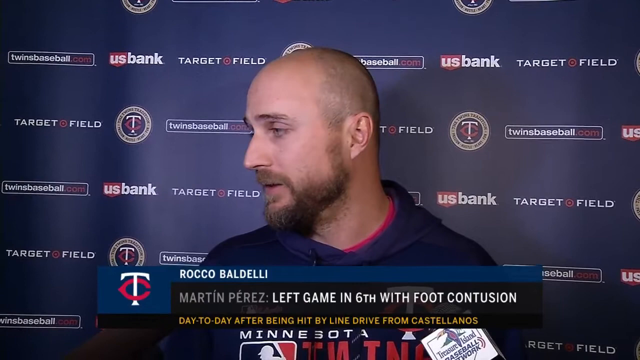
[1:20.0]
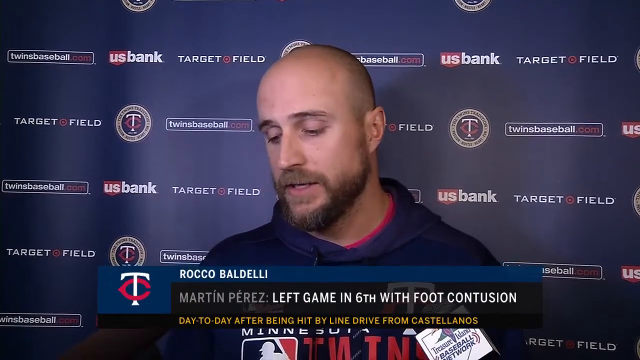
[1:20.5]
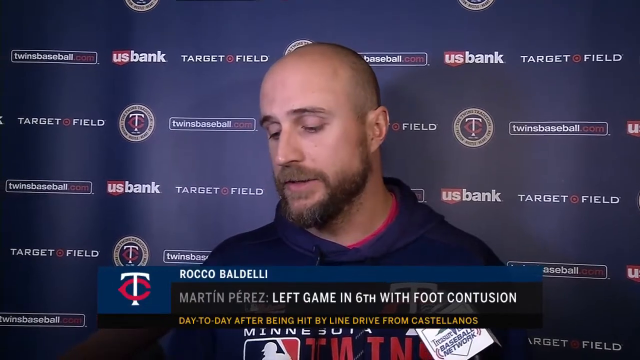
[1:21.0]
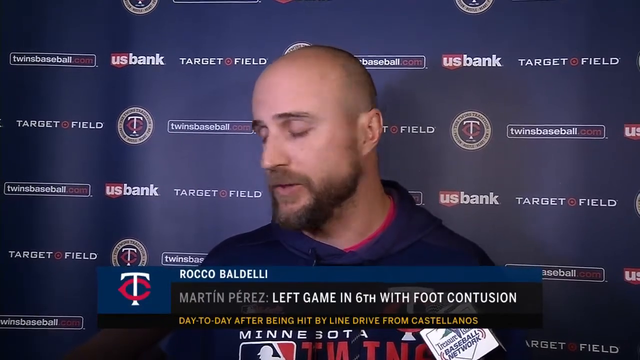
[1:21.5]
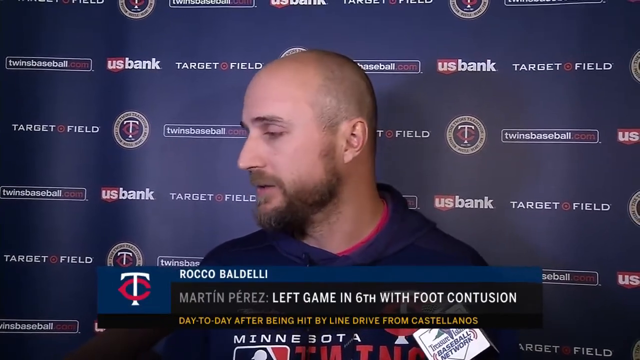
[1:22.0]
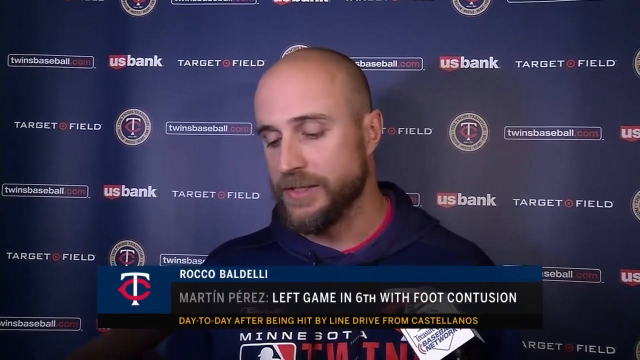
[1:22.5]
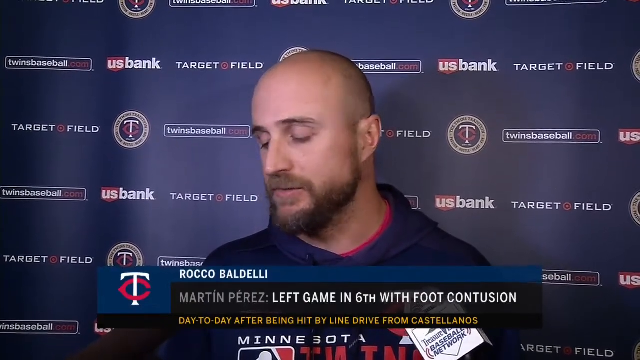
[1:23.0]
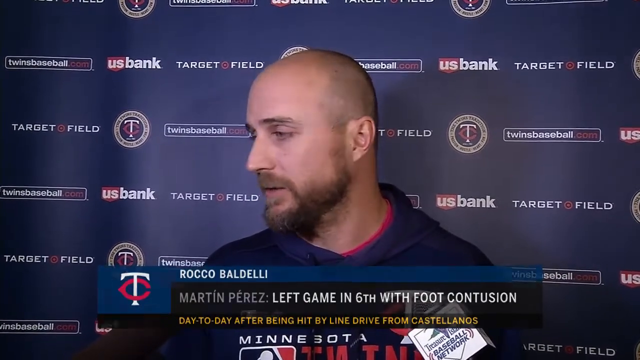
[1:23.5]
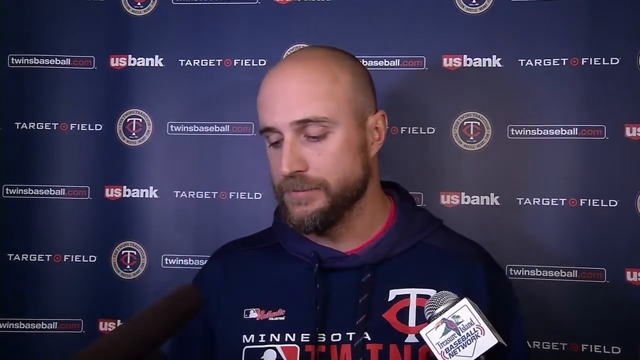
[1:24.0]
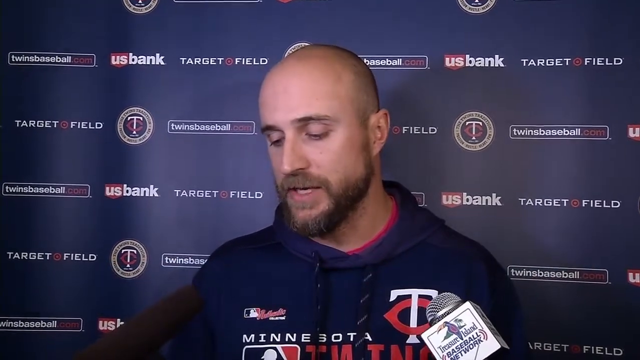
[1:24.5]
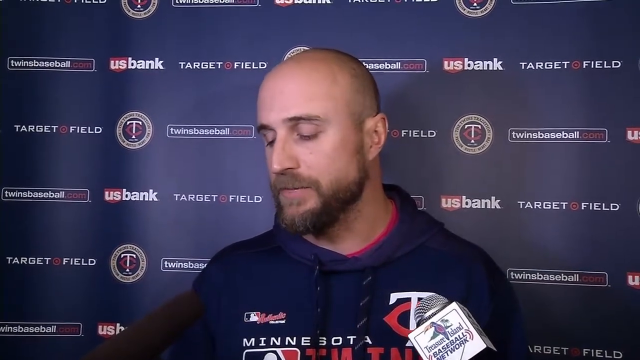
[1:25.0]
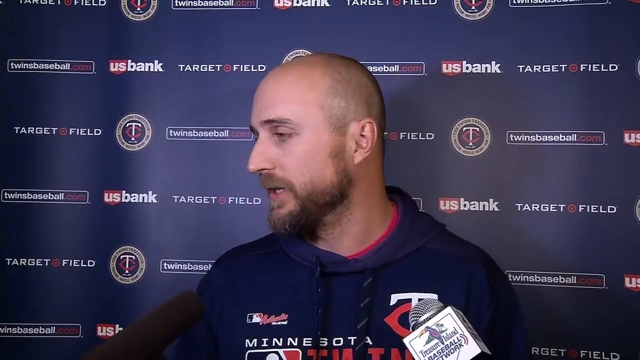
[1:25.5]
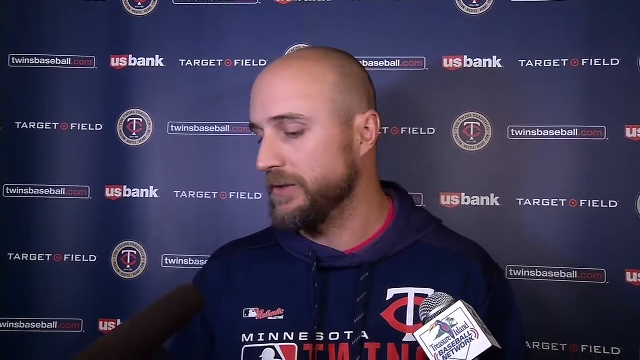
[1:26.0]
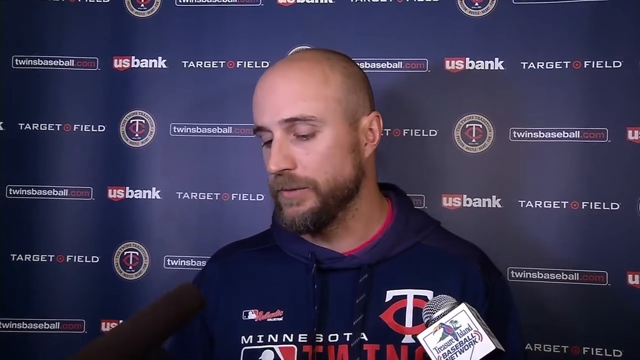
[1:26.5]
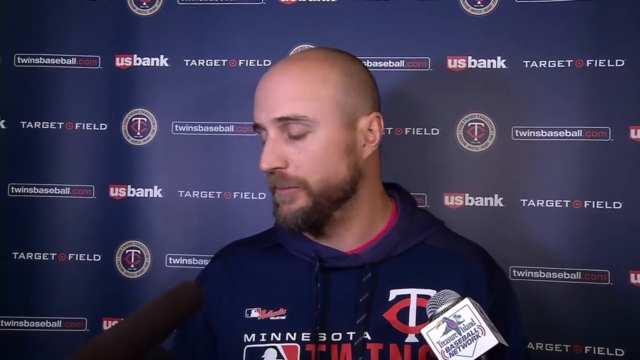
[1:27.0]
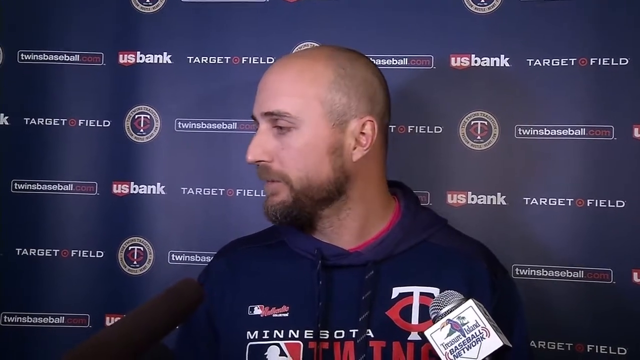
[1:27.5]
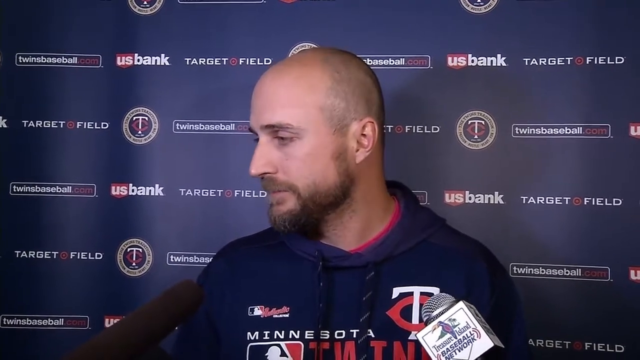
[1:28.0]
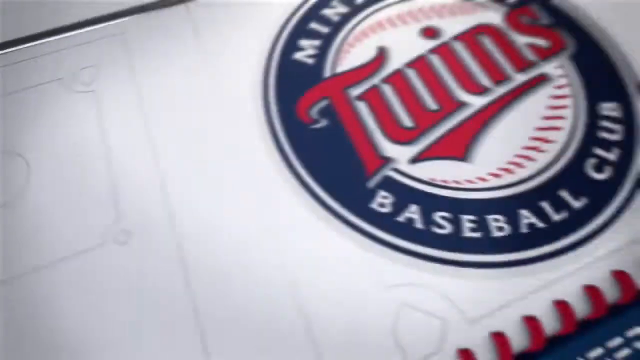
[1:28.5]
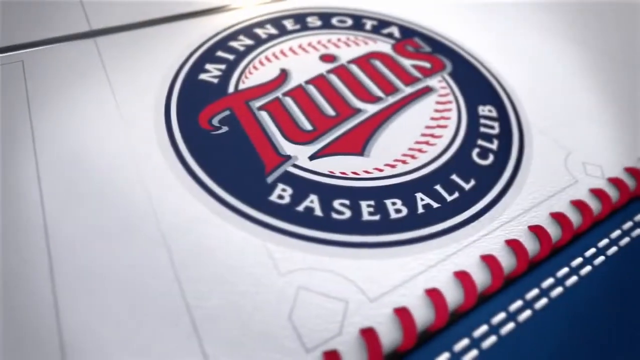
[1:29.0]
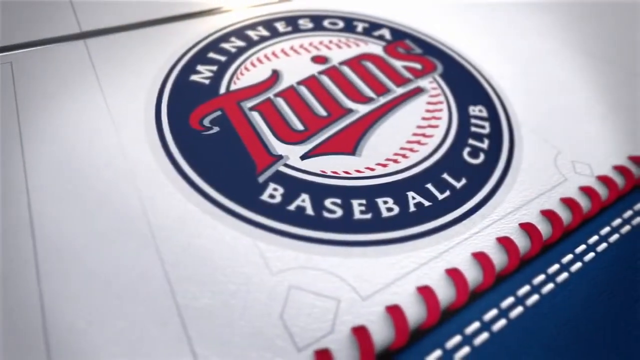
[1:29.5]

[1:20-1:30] Rocco, possibly the Twins' manager, speaks into the camera, talking to the press, with "Treasure Island Baseball Network" on a microphone just to his left. There are four lines of advertising on the dark blue wall behind him. He faces the viewer but looks to the viewer's left, his right, with his head in profile. The bottom of his left ear is rather pointed, and the beard on the left side of his face is not trimmed very well, appearing a bit bushy and unkempt. Information about Martin Perez's injury remains at the bottom of the screen.